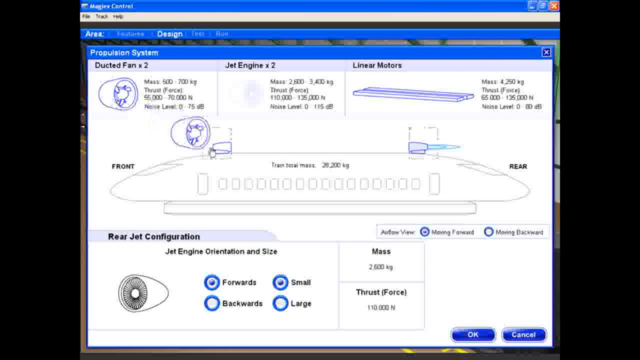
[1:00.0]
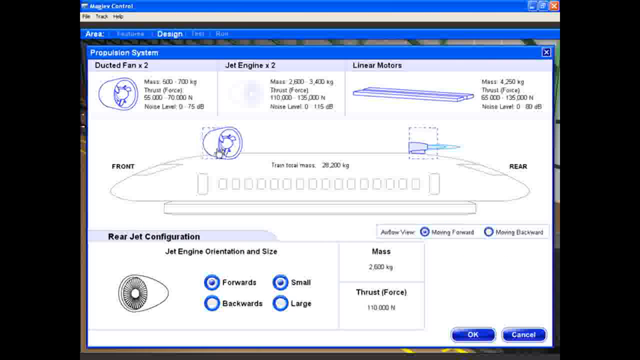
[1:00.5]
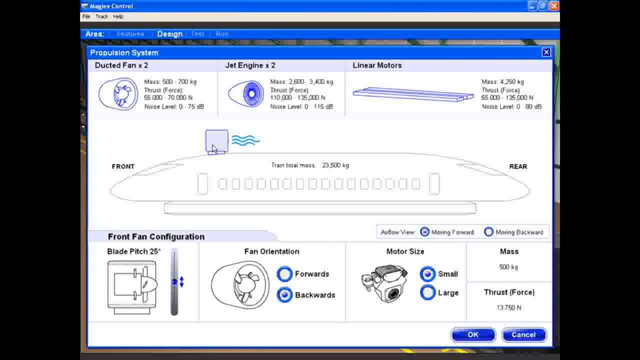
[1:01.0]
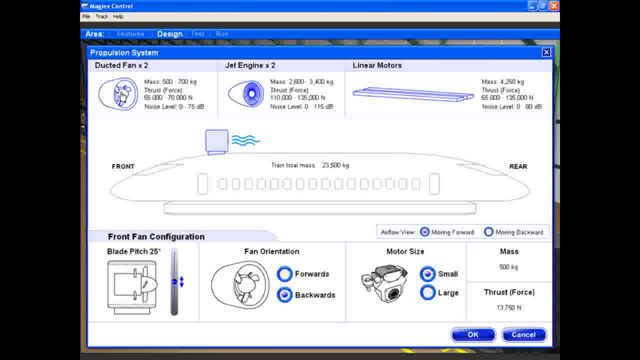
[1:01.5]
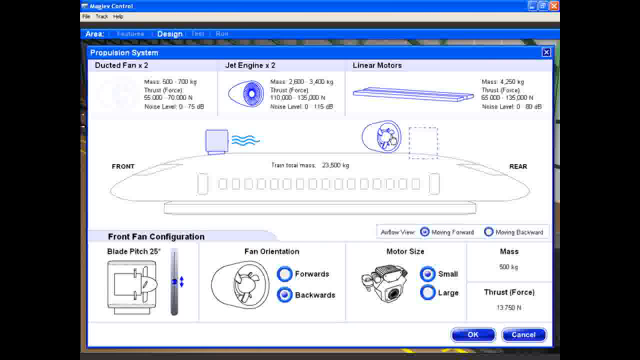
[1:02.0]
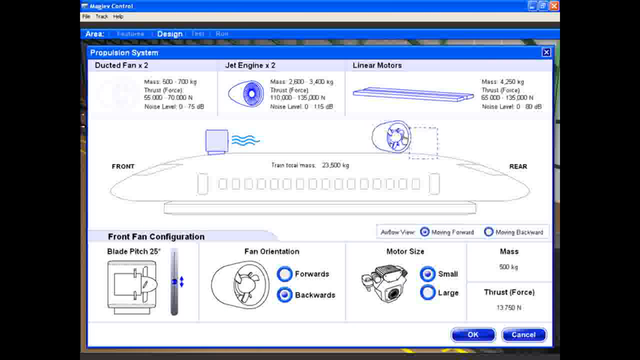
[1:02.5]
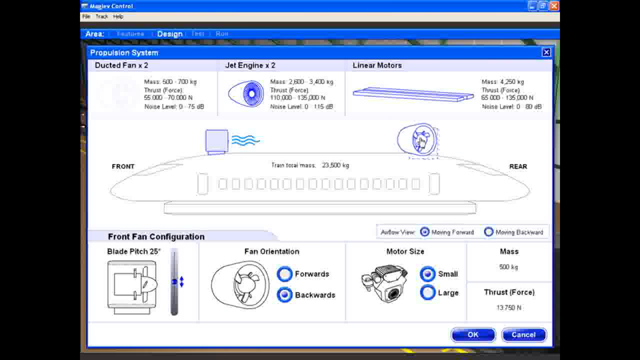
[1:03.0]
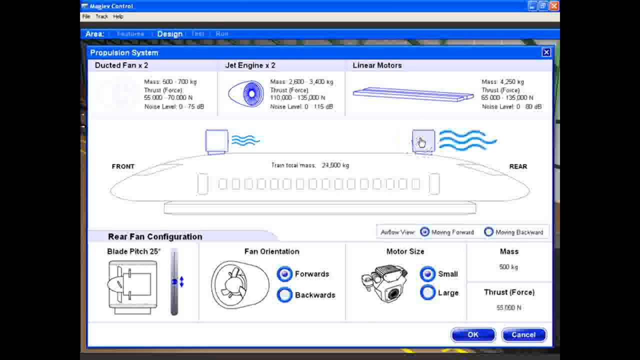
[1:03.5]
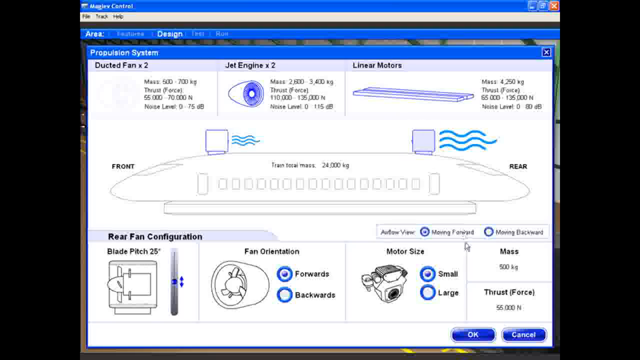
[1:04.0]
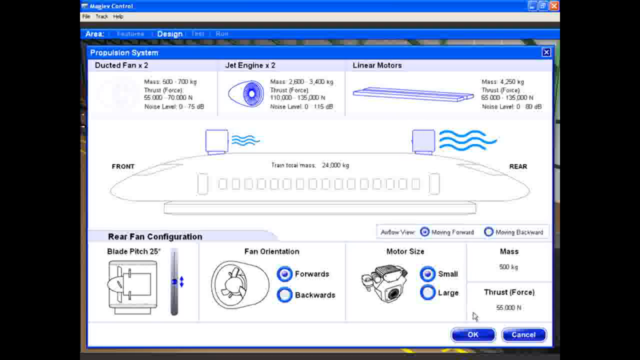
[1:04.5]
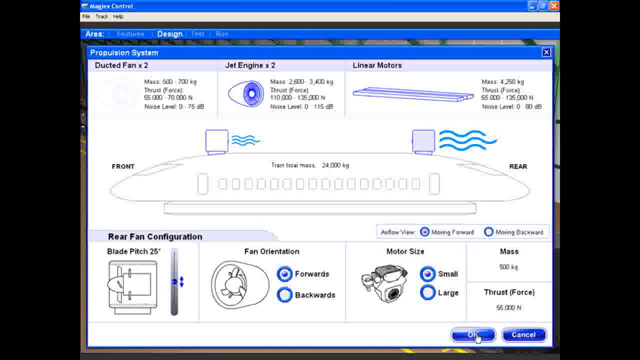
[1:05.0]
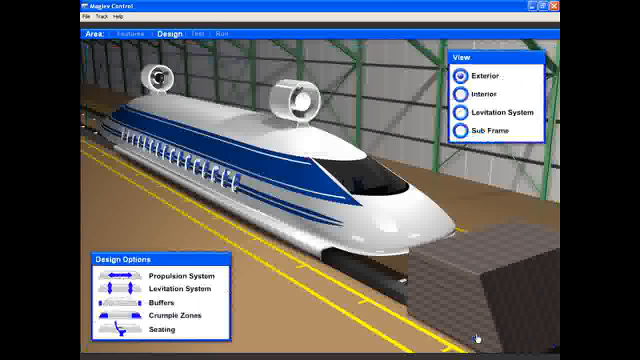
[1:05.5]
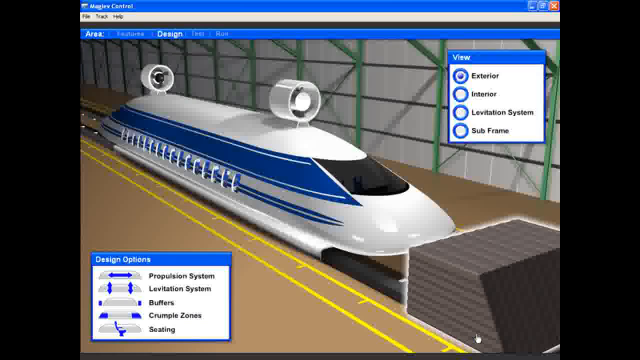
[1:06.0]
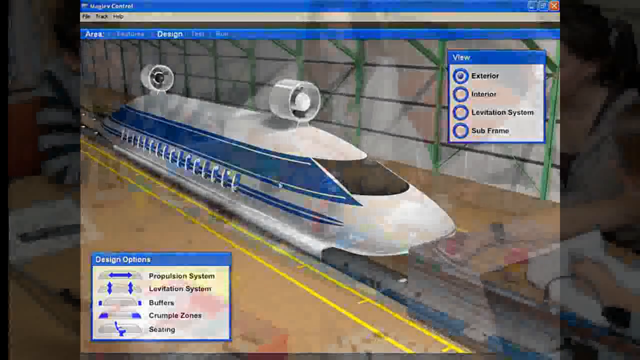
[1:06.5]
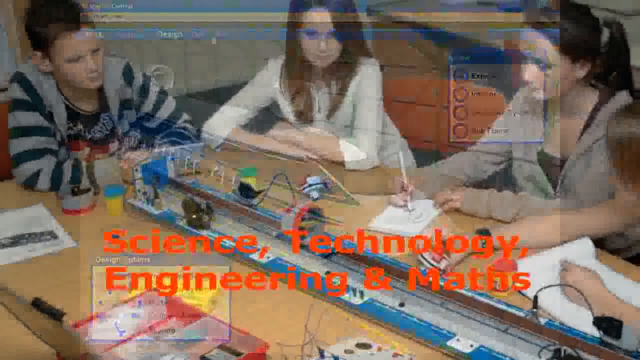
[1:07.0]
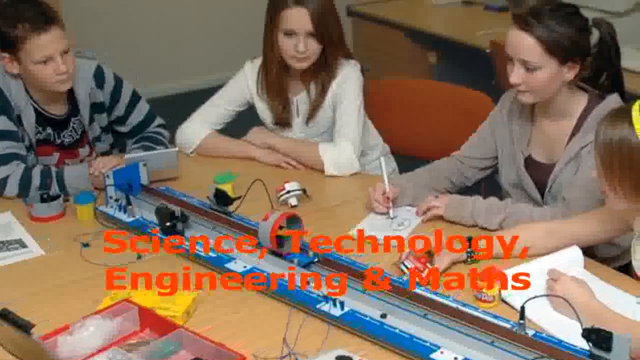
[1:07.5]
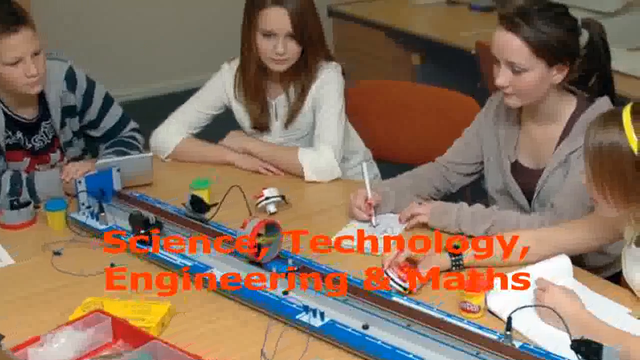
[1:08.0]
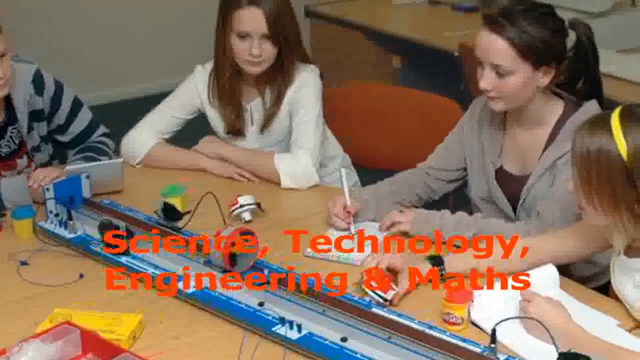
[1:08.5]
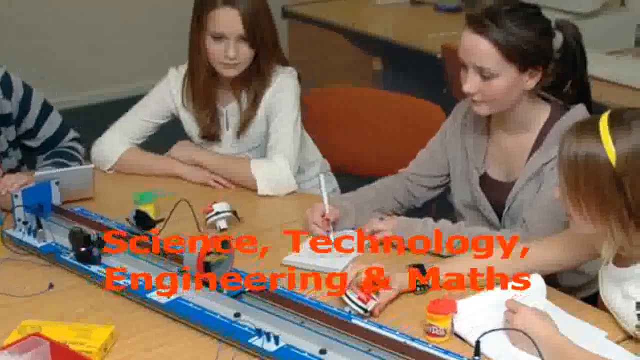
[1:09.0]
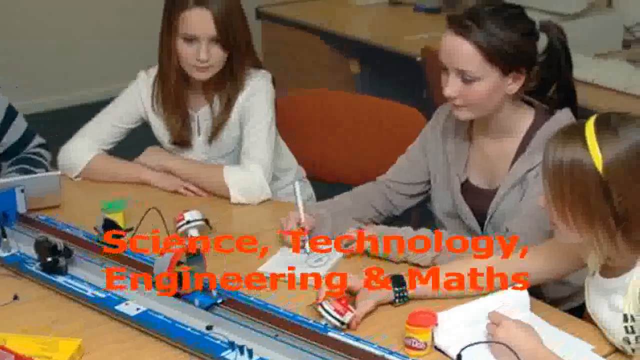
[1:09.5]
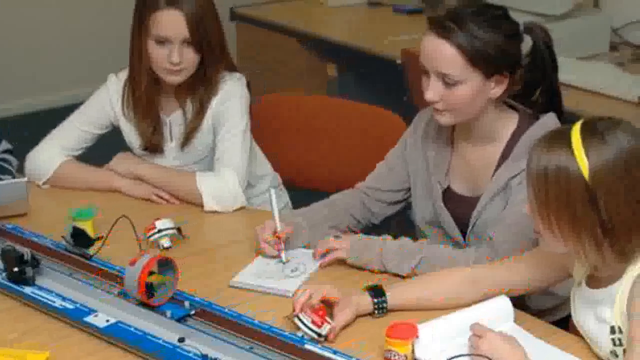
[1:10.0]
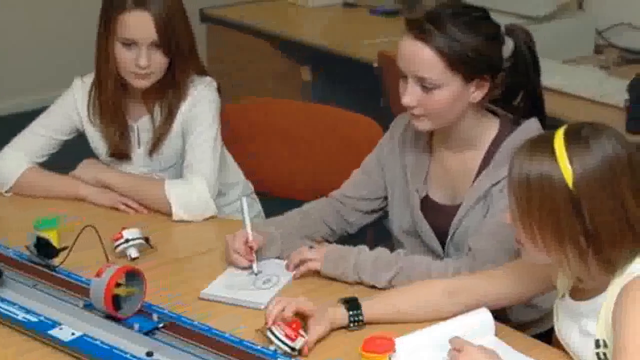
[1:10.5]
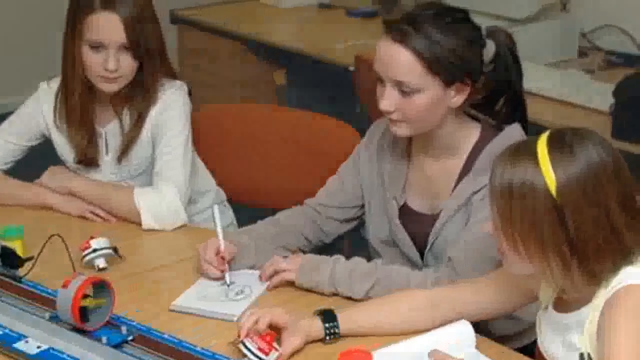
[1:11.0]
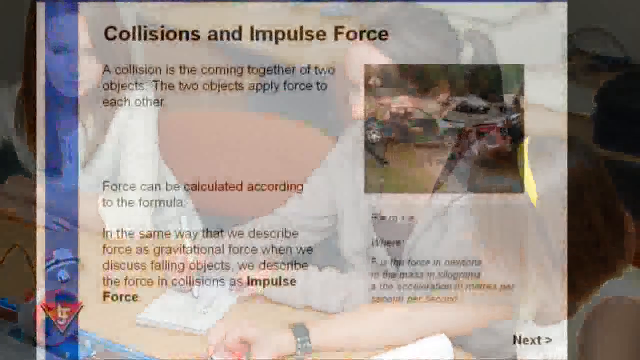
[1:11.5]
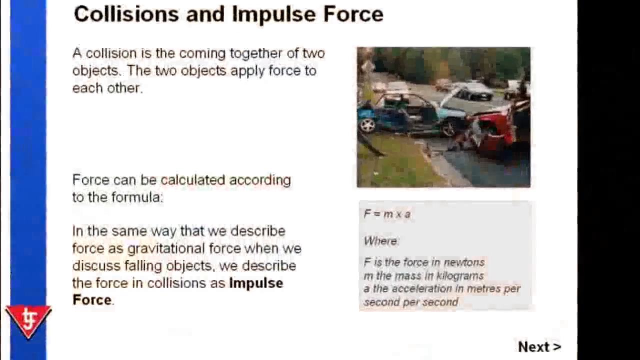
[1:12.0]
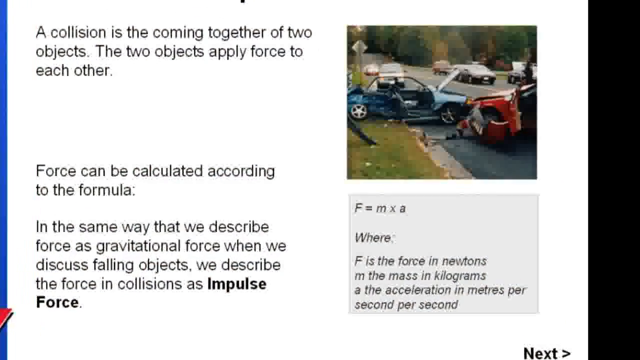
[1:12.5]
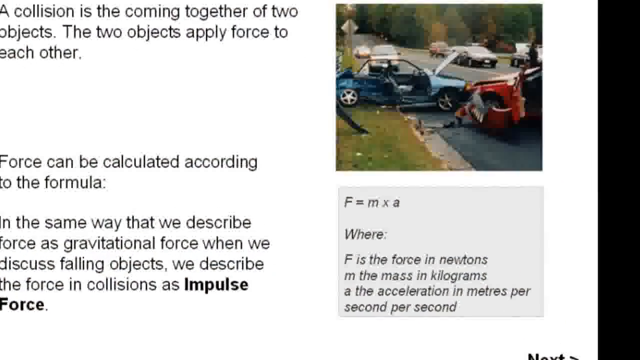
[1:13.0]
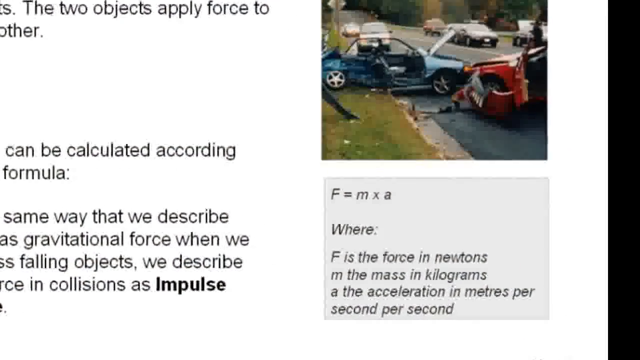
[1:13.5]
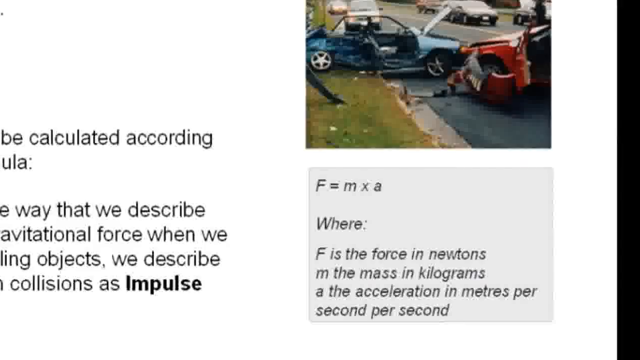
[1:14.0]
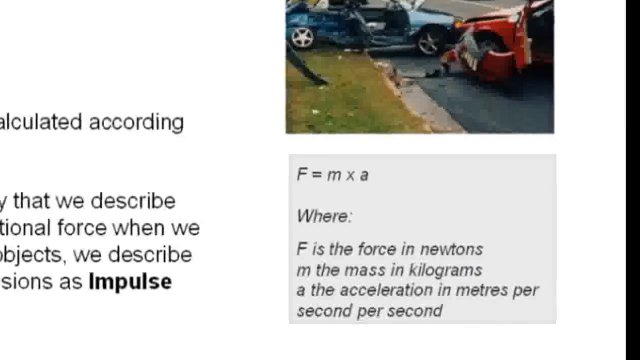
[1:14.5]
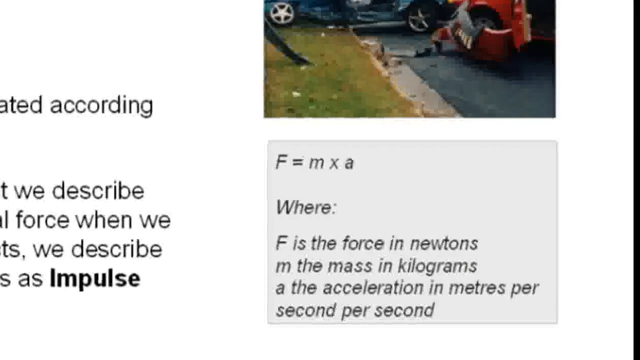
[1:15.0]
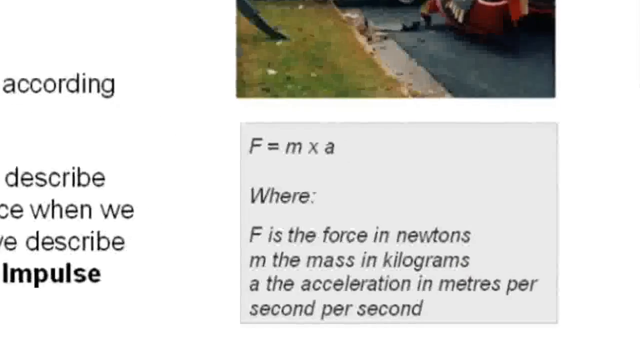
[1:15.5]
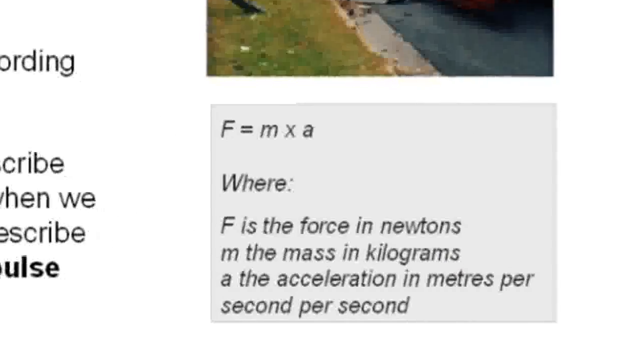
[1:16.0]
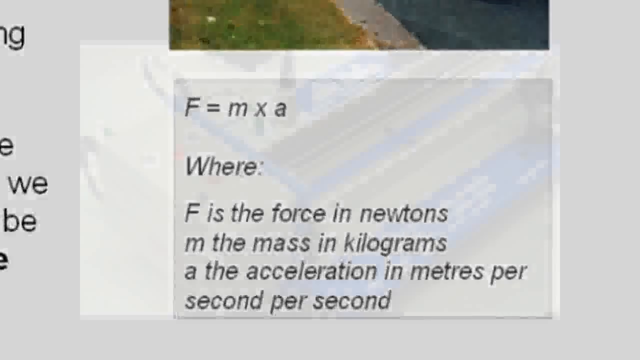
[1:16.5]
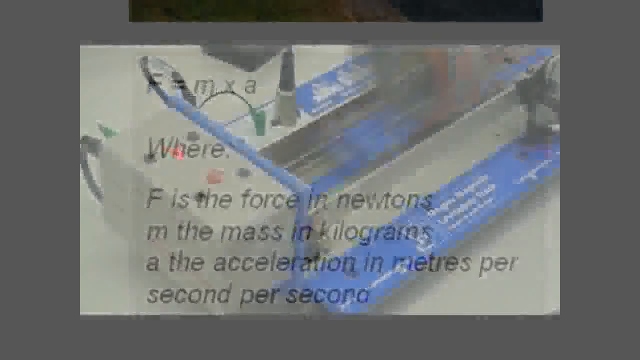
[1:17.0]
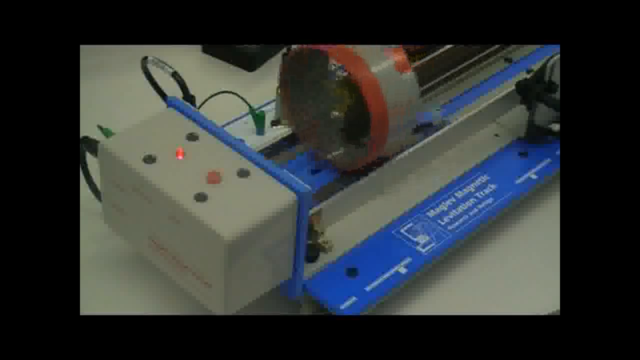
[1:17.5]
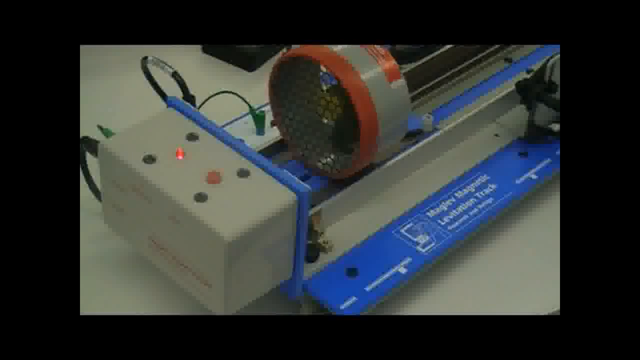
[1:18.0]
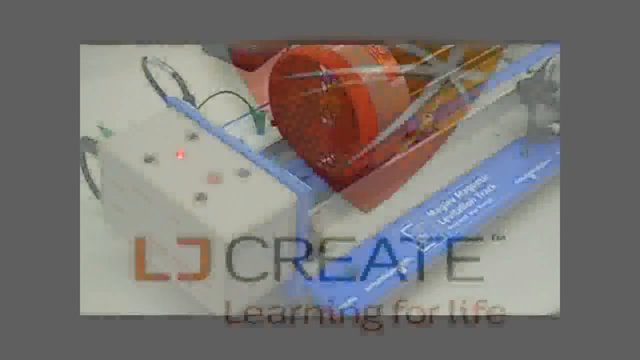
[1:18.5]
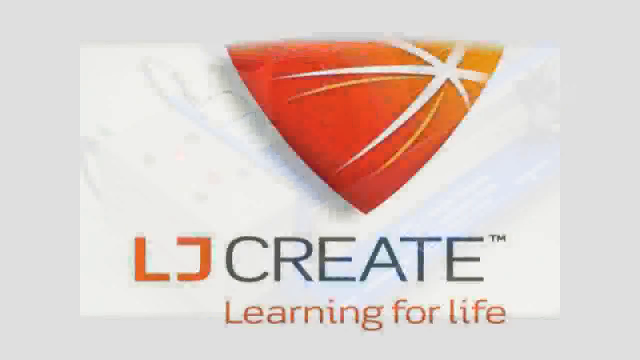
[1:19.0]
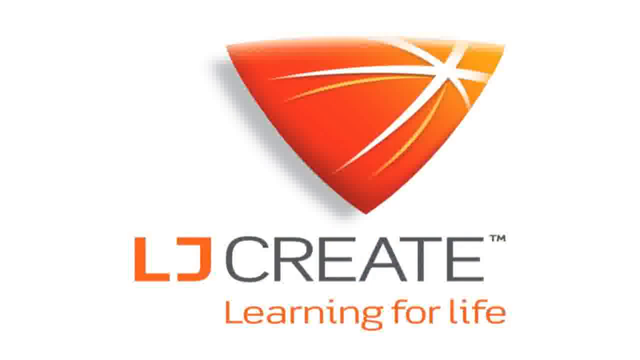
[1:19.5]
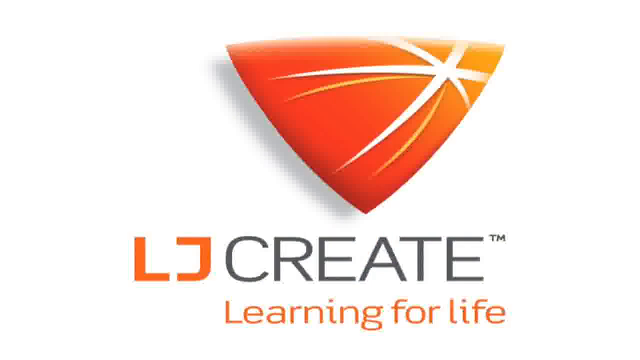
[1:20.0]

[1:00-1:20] The same image of the Maglev Central program appears. It has a section that says "area and design", and below it a window that says "propulsion system". It shows a grayed-out, simplified image of a train with different sections such as ducted fan times two, jet engine times two, linear motors and rear jet configuration. The ducted fan is dragged across to one section and okay is clicked. The video goes back to the same image of four students around a table with some scientific apparatus, with the title "science, technology, engineering and maths" in orange. The view zooms in to the right and moves to a webpage stating "force equals mass times acceleration", or "F equals M times A", where force is the force in Newtons, and zooms in on this. The same image of the train system and the machinery example follows. At the end, a webpage says "LJ create learning for life", with the L and the J in orange, "create" in black and "learning for life" also in orange.